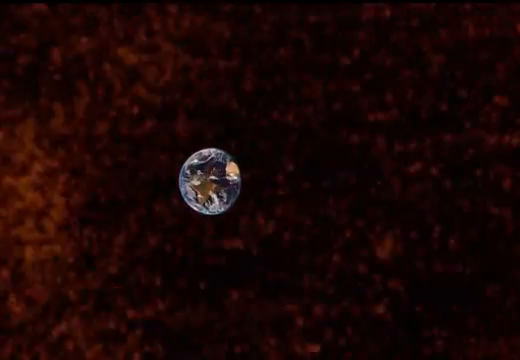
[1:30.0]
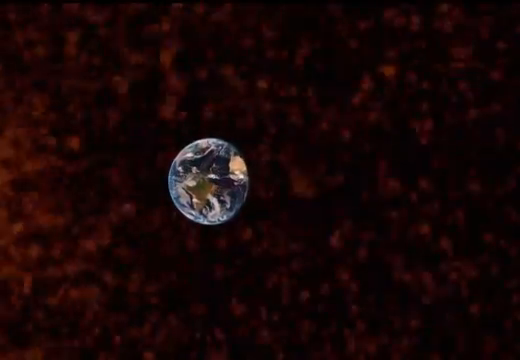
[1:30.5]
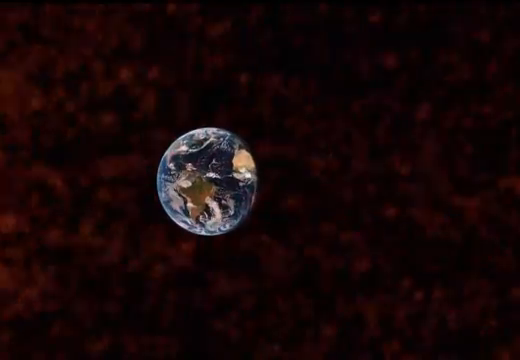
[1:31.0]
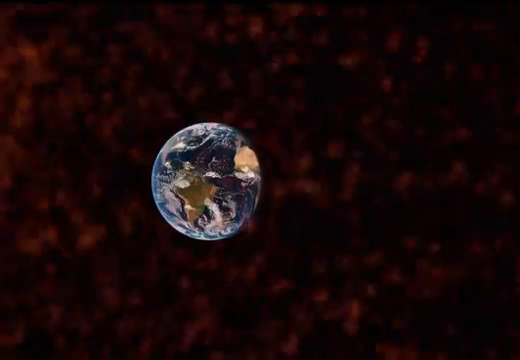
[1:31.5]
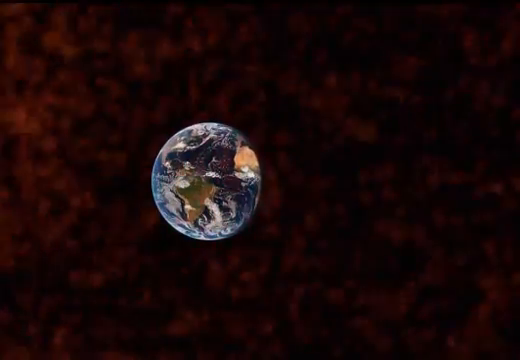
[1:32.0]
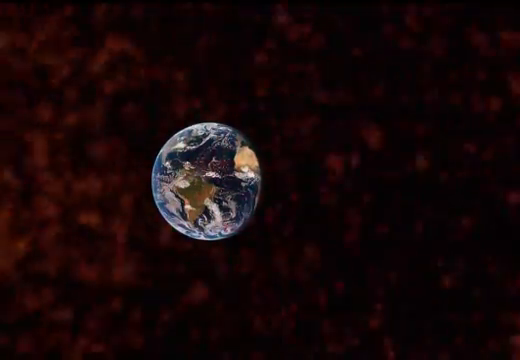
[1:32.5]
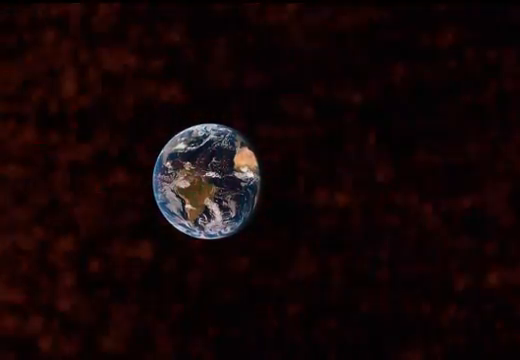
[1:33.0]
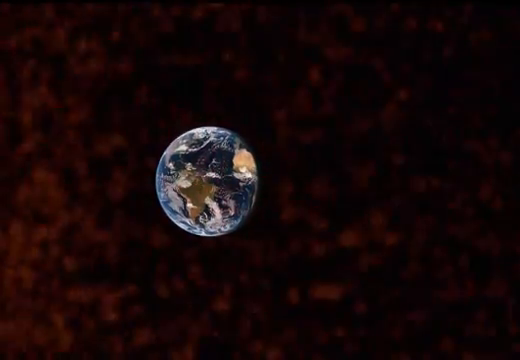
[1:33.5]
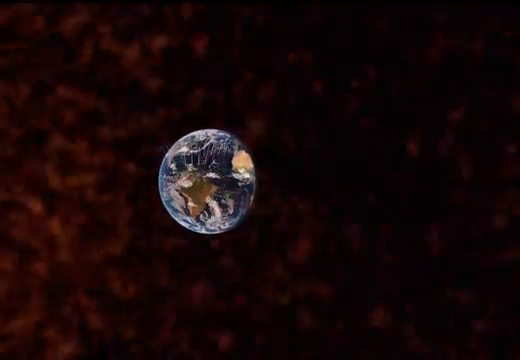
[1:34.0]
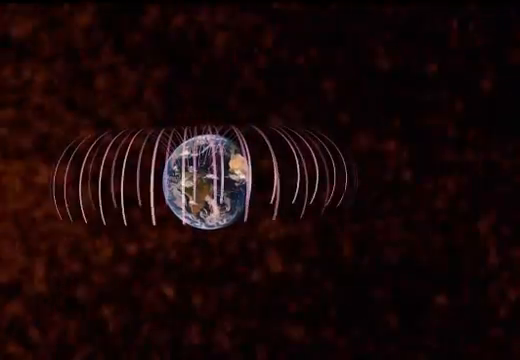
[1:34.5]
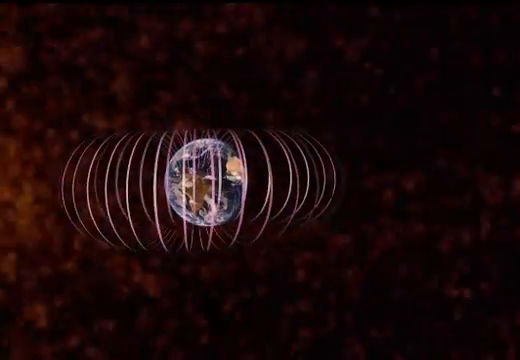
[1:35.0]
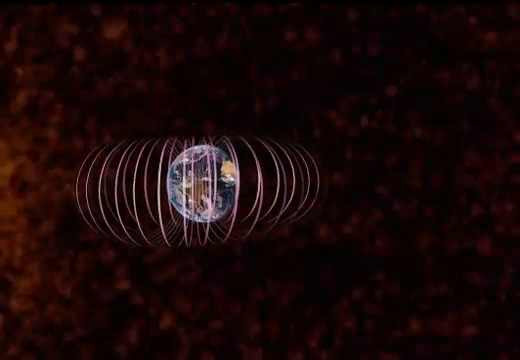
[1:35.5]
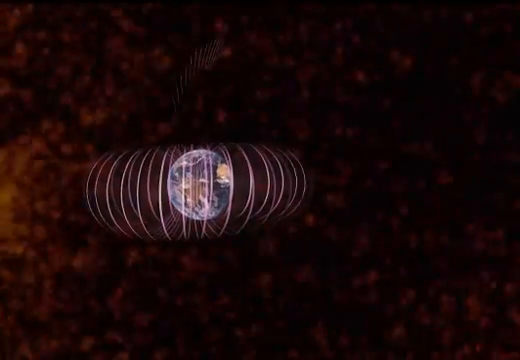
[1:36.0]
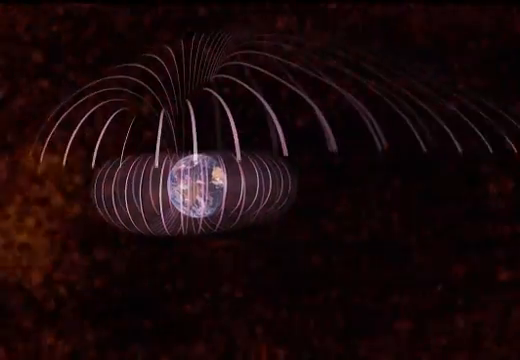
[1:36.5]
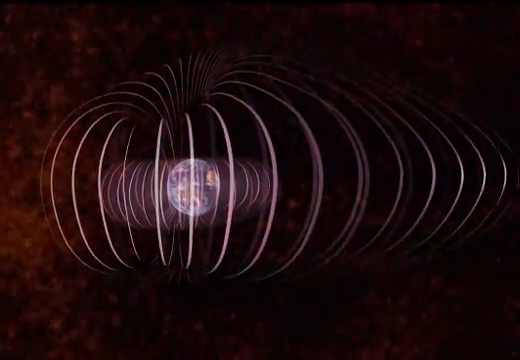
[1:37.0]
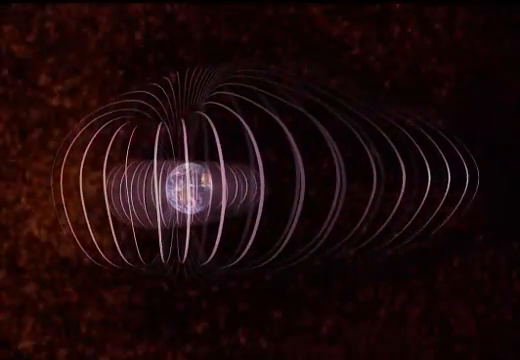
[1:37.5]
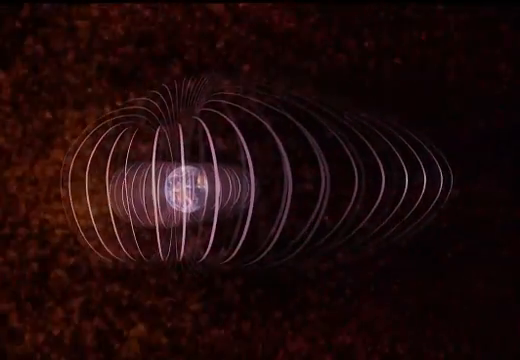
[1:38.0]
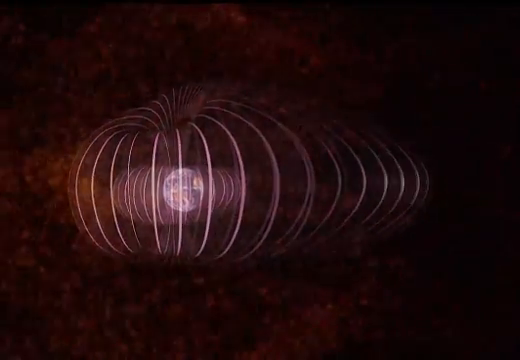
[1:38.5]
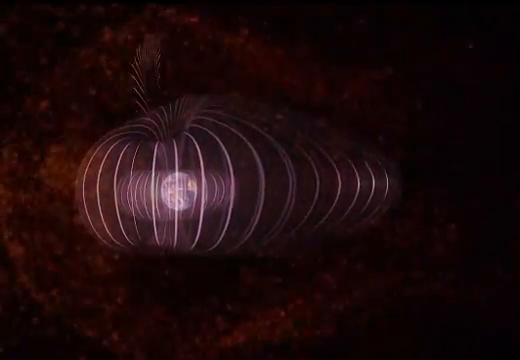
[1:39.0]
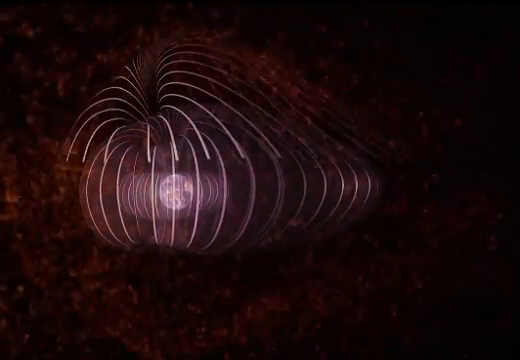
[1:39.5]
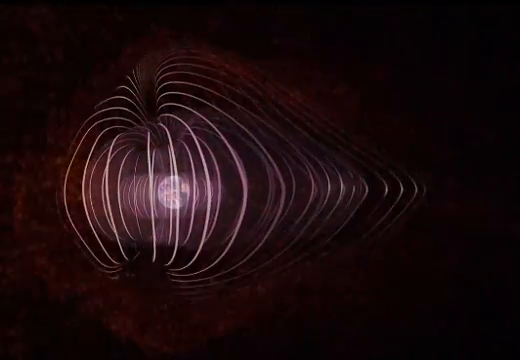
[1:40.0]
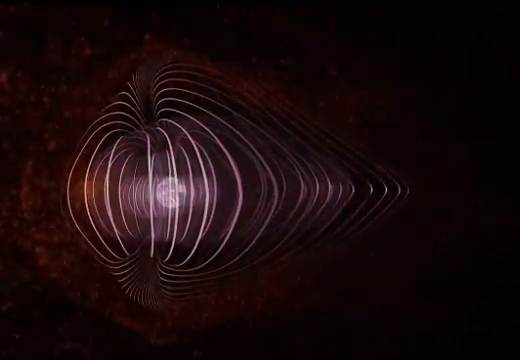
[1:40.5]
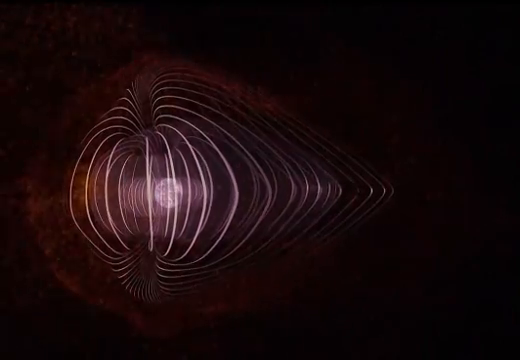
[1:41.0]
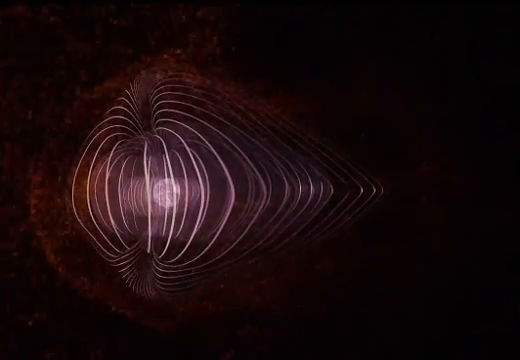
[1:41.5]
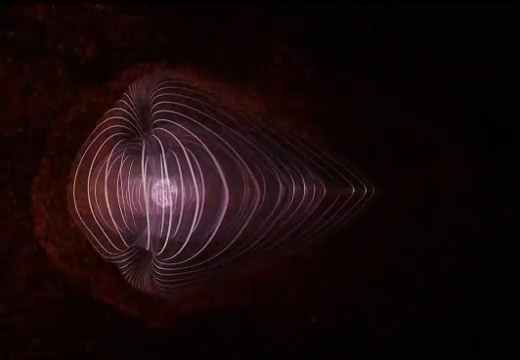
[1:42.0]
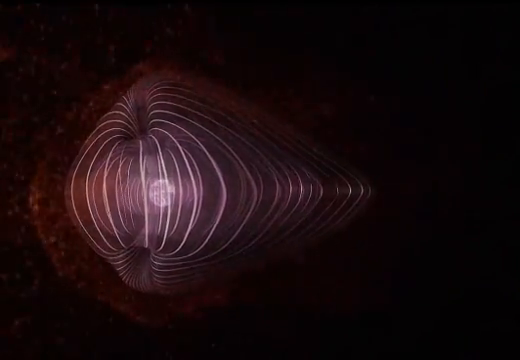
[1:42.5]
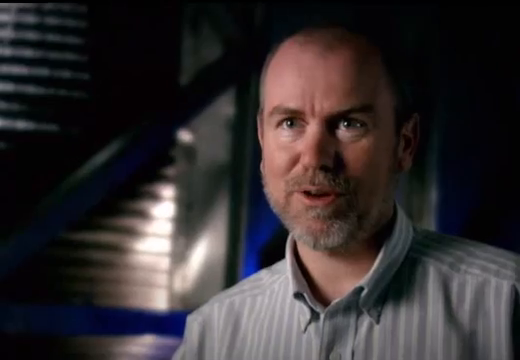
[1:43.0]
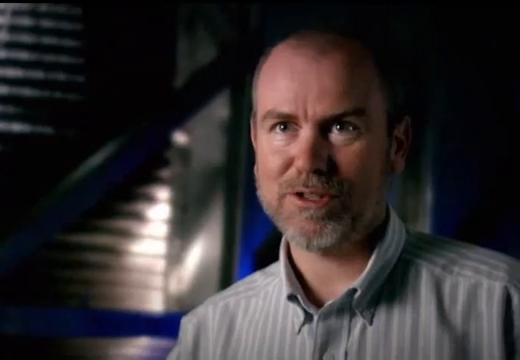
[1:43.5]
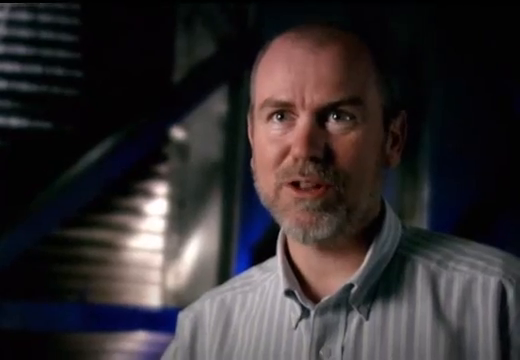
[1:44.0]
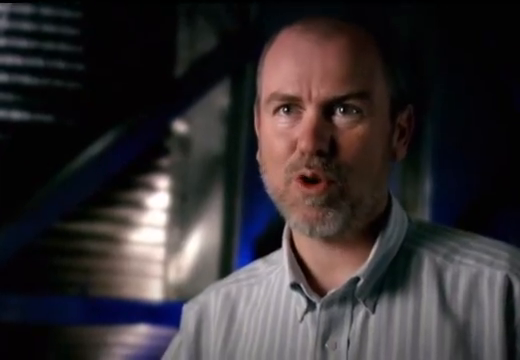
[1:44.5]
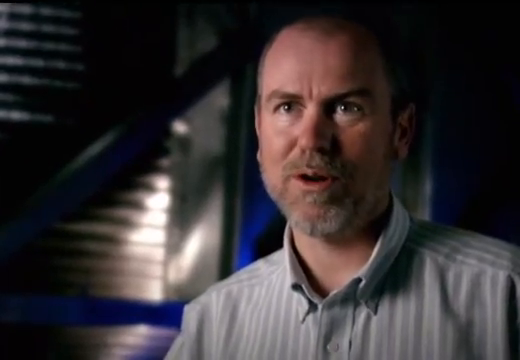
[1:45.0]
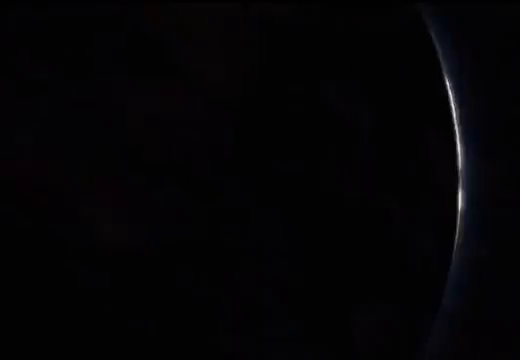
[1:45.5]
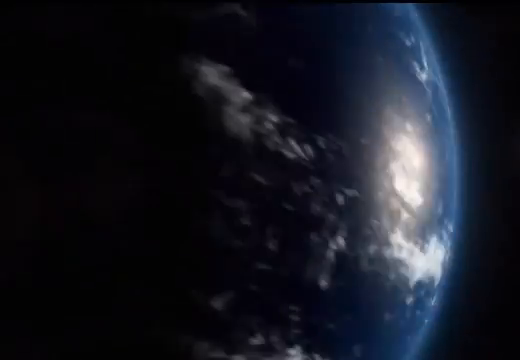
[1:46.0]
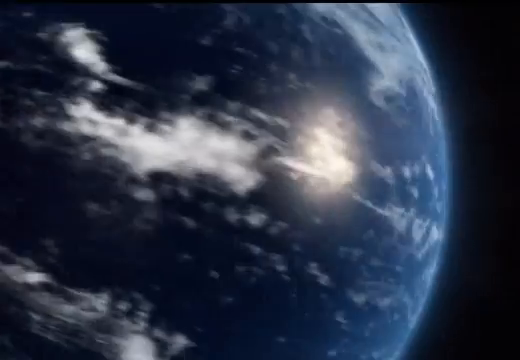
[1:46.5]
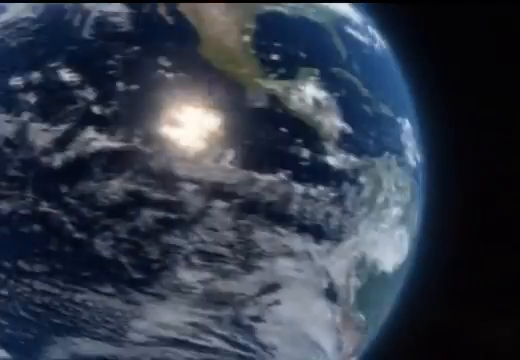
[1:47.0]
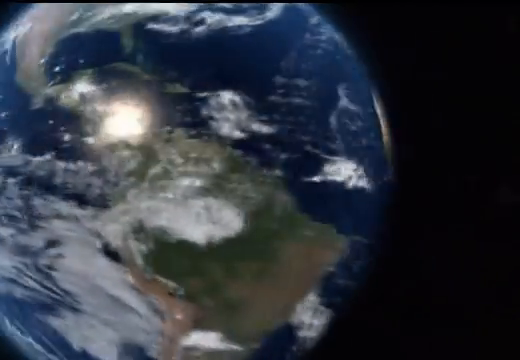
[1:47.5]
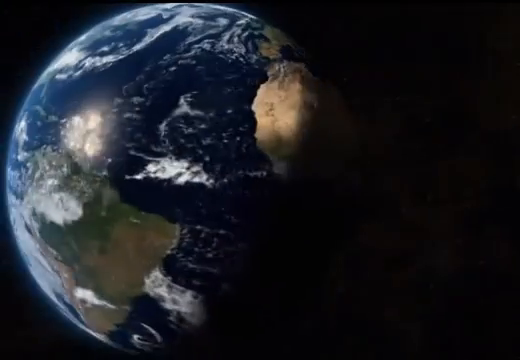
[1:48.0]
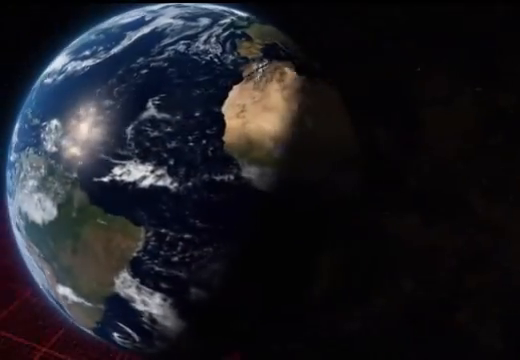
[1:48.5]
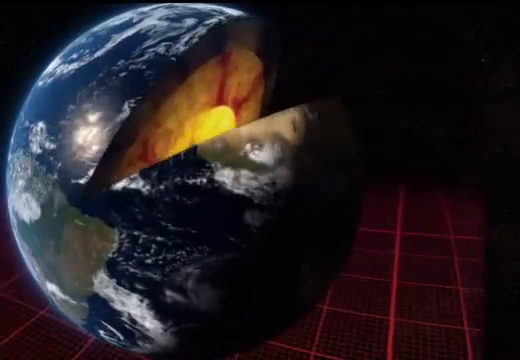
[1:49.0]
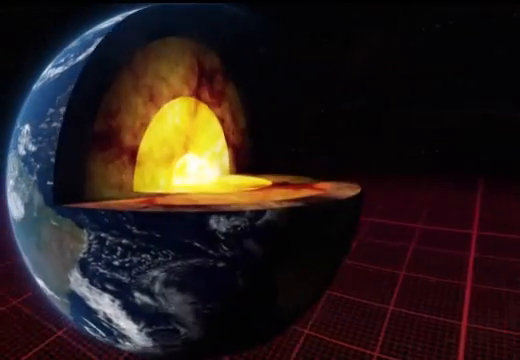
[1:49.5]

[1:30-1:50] The view continues zooming in on planet Earth against a completely black background, with several orange particles emitting from the left side. Several lines cover and surround the planet, more lines surround it and the pattern continues. A white Caucasian man in a gray and white striped collared shirt appears; the mostly blurred background shows a building with mostly gray pillars and a couple of lights, including a white and a blue light. Planet Earth is then shown rotating to the left, followed by an animation showing the inside of the Earth cut by 25%, with the core in colors such as black, orange and yellow.